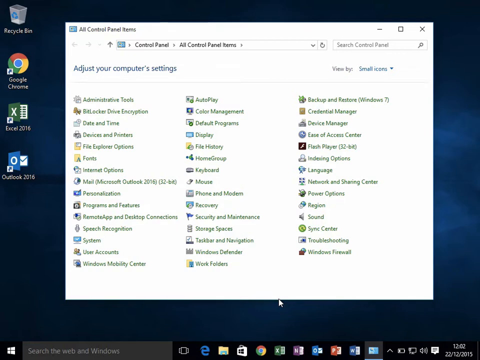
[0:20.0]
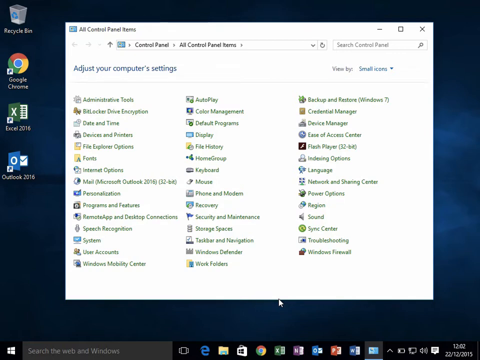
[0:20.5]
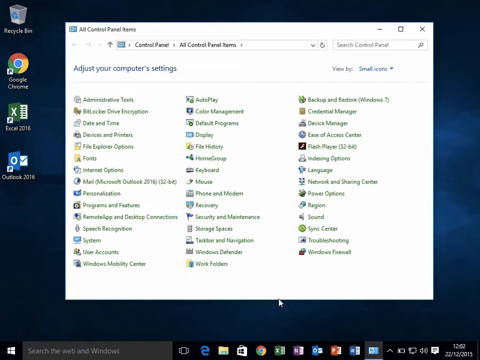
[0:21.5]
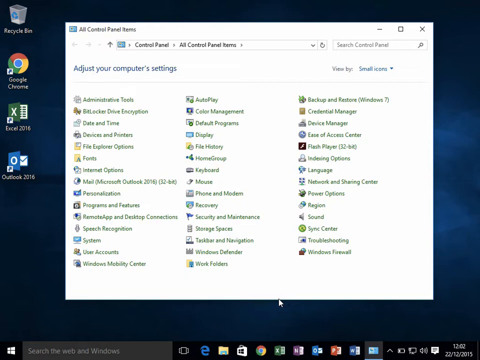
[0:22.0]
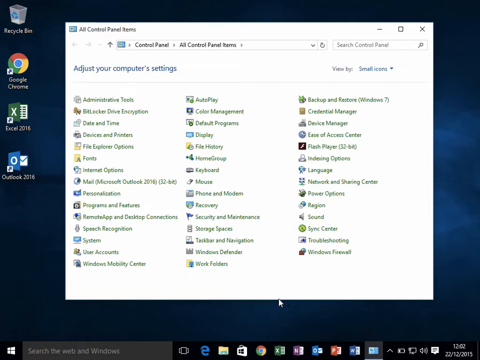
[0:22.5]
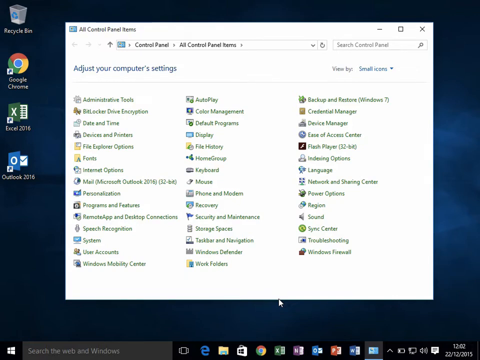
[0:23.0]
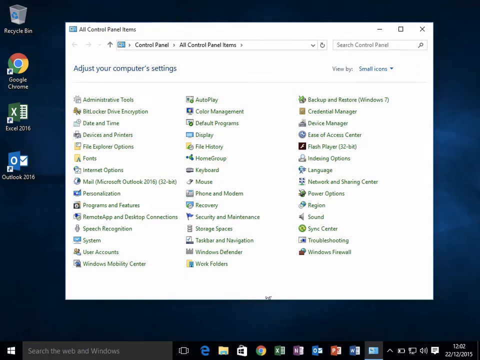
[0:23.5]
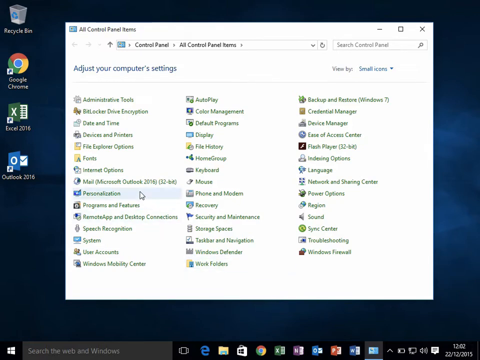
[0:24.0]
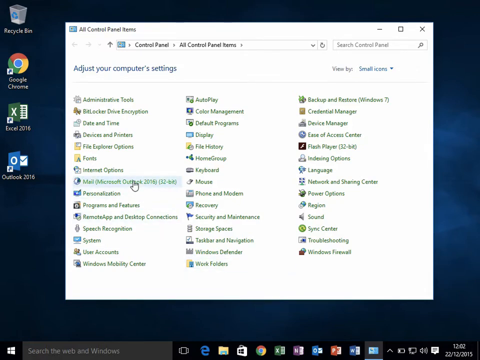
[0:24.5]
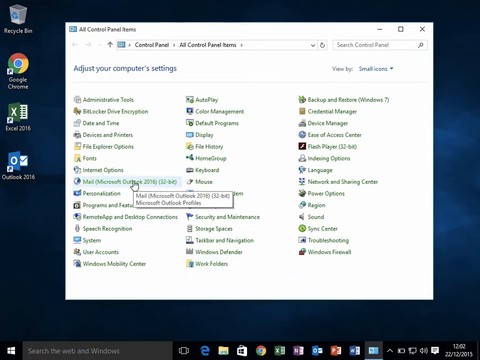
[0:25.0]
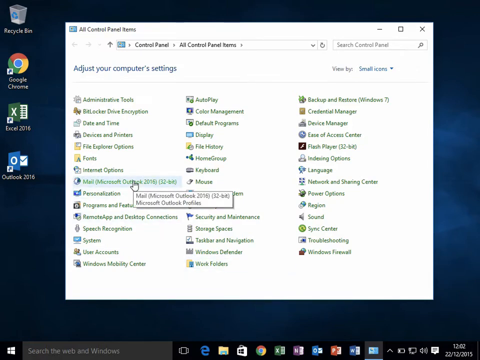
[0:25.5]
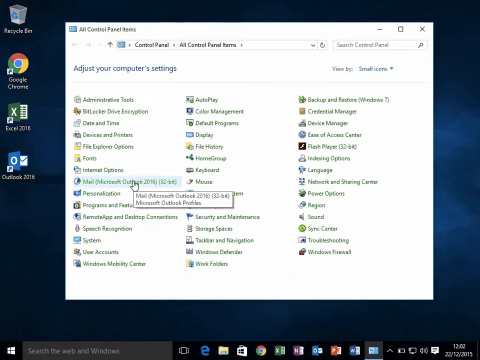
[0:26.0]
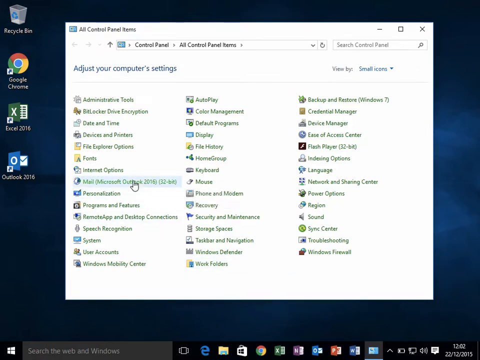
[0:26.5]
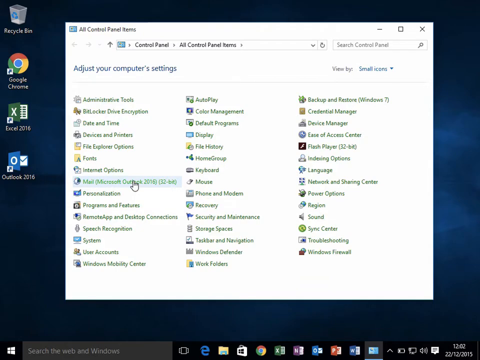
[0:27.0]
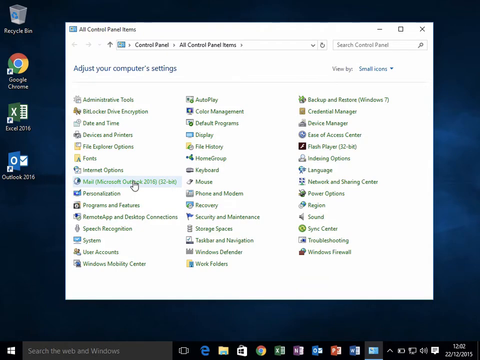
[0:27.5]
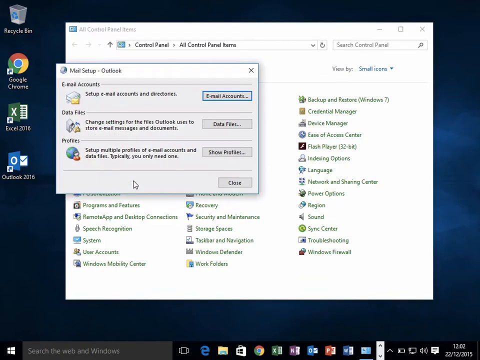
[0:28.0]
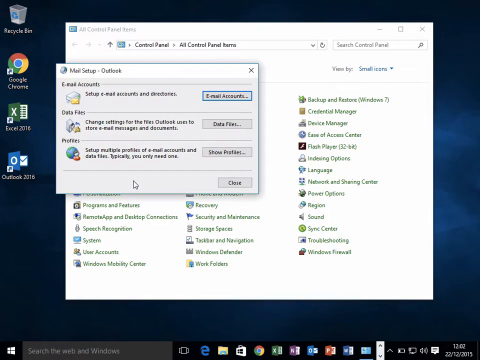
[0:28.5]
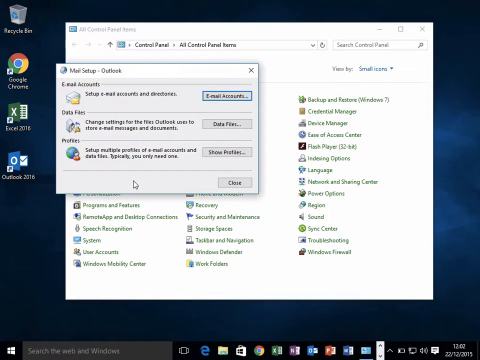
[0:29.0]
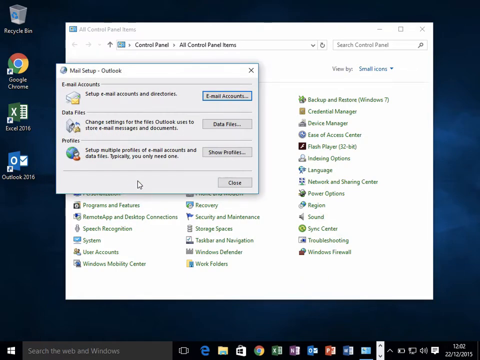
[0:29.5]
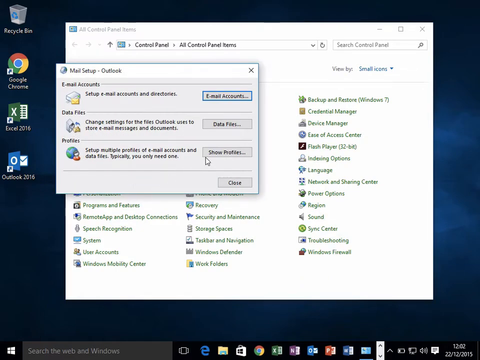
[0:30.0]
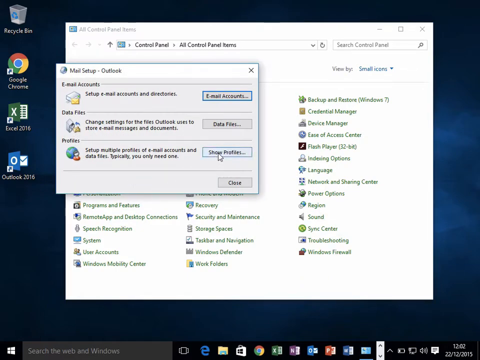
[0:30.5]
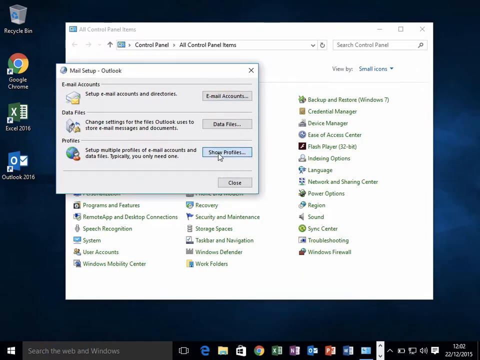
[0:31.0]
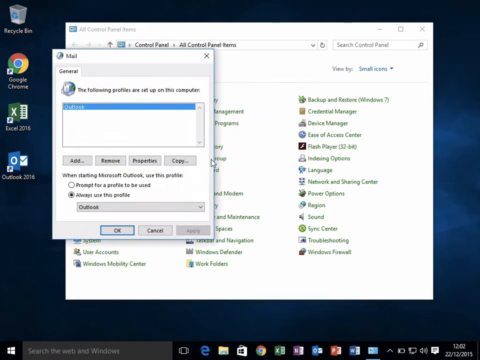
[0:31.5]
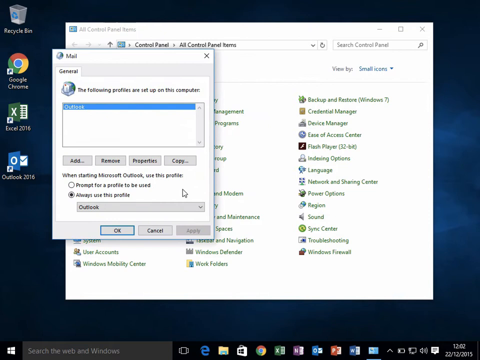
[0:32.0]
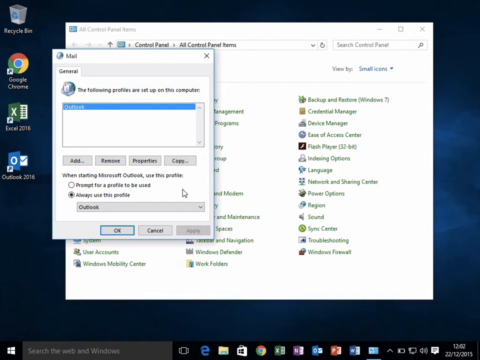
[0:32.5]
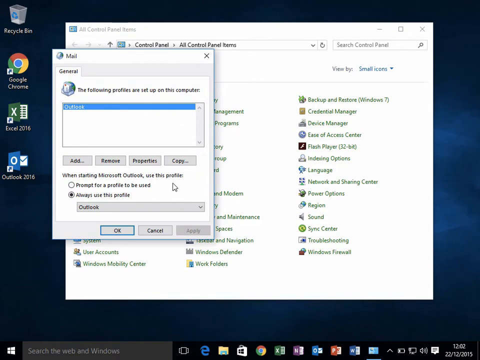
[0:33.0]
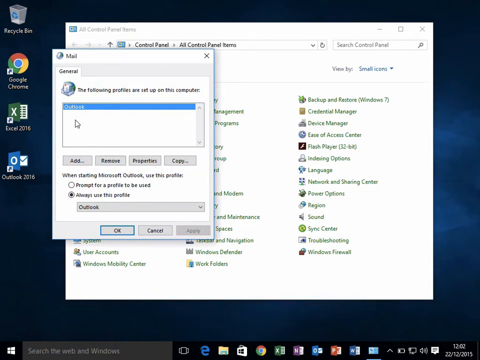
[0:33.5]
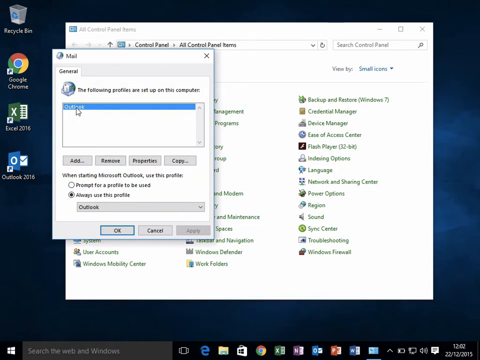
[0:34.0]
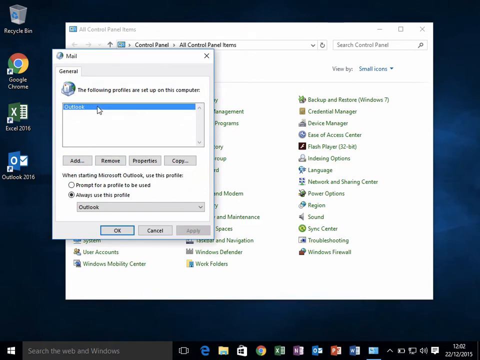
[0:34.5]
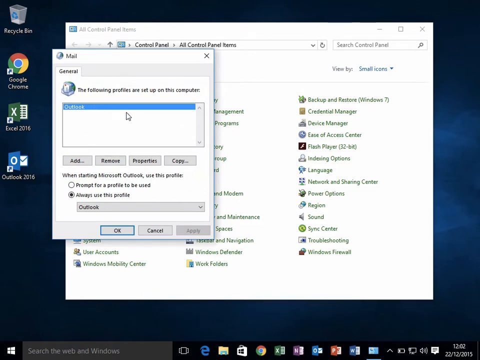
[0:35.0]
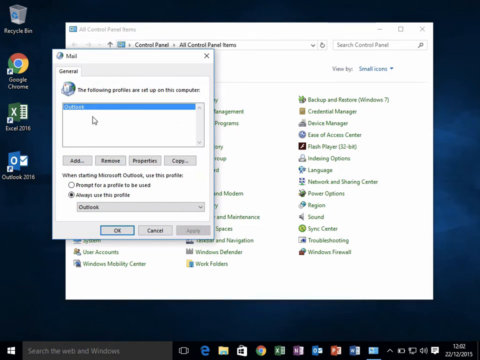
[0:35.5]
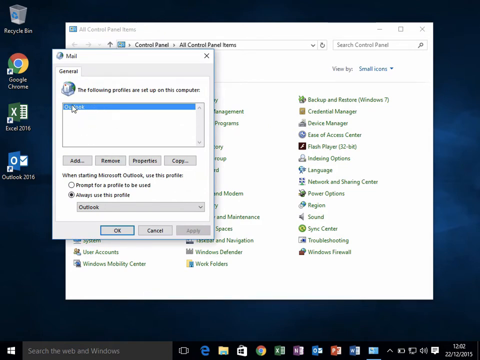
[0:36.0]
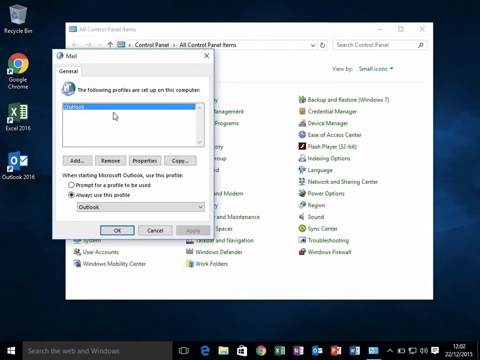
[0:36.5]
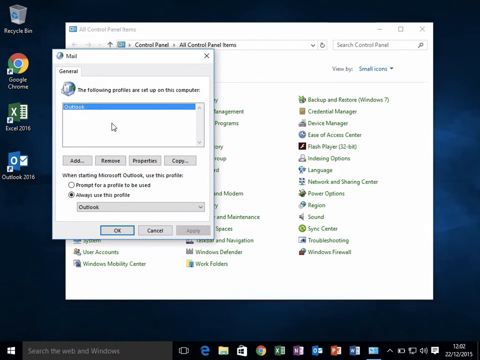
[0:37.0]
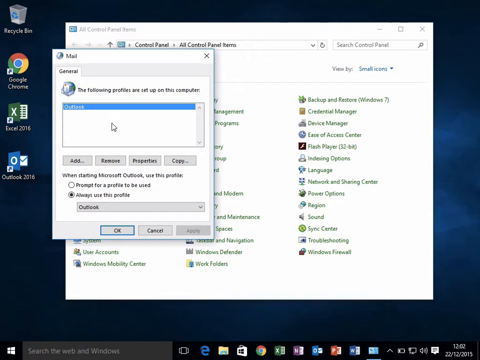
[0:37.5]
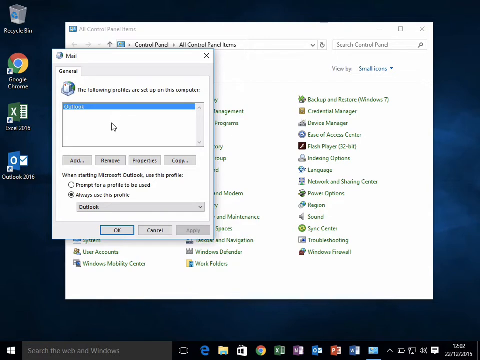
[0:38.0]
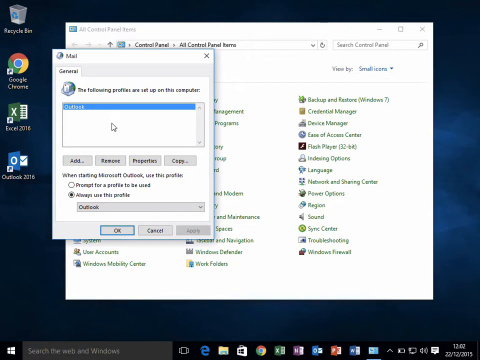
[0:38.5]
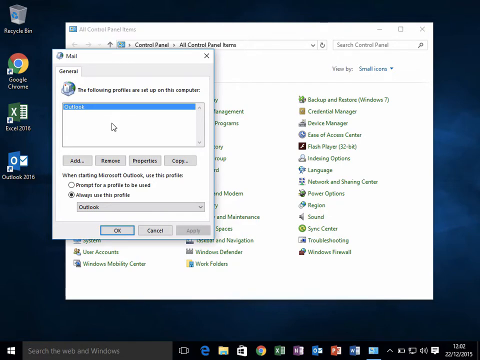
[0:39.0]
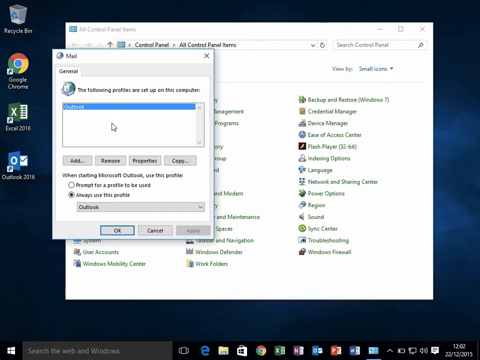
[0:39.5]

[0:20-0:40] The mouse pointer moves to the first row on the left inside the control panel window and lands on a link that says "Mail Microsoft Outlook 2016". The user clicks it, and a small window opens at the top left with "Mail Setup Outlook" at its top. It has three buttons on the right side and a fourth, close button in the bottom right corner. The pointer goes to the third button, which says "Shows Profiles", and another small window opens in the same area with "Mail" in its top left corner. The word "Outlook" is highlighted in blue, and the pointer moves over to this highlighted area and hovers around it.